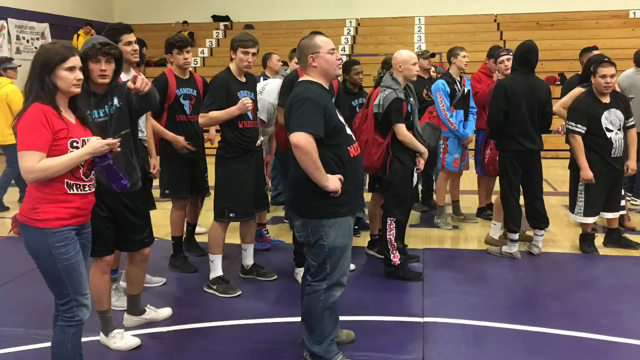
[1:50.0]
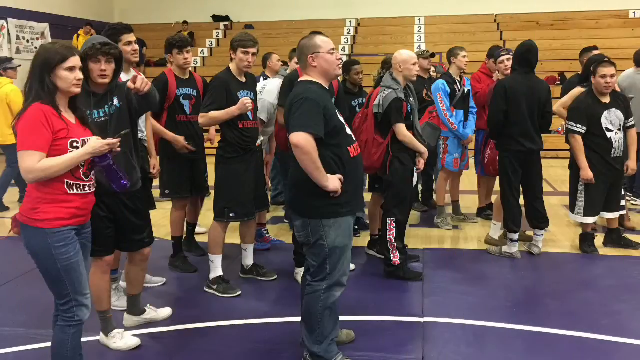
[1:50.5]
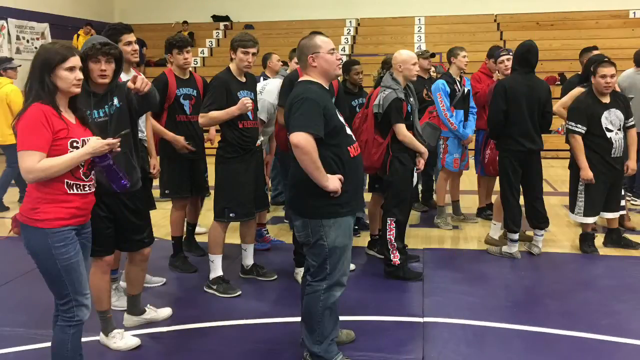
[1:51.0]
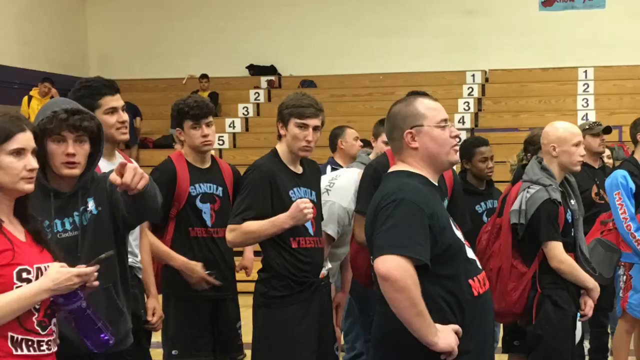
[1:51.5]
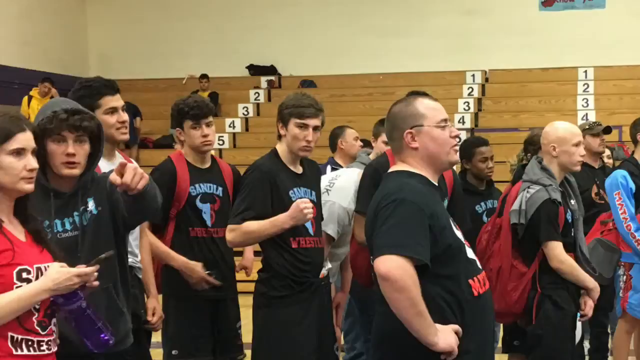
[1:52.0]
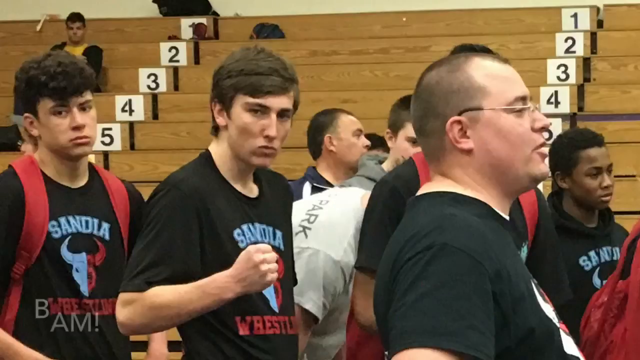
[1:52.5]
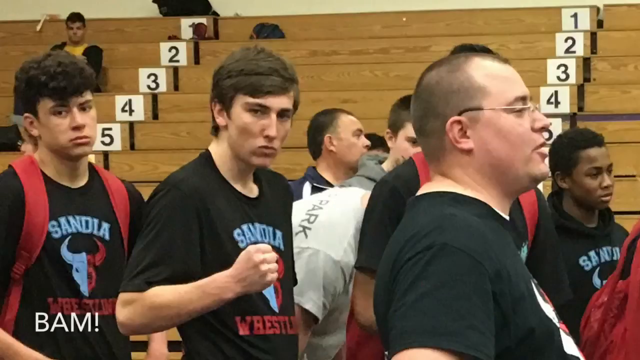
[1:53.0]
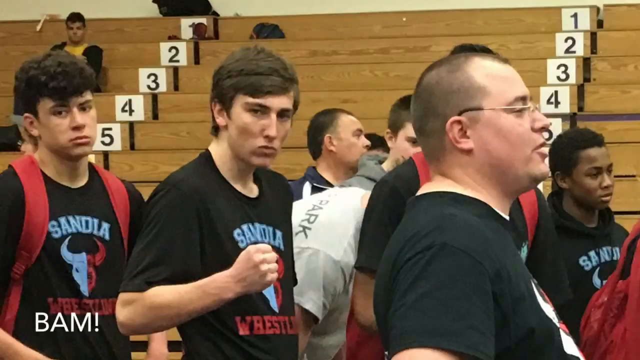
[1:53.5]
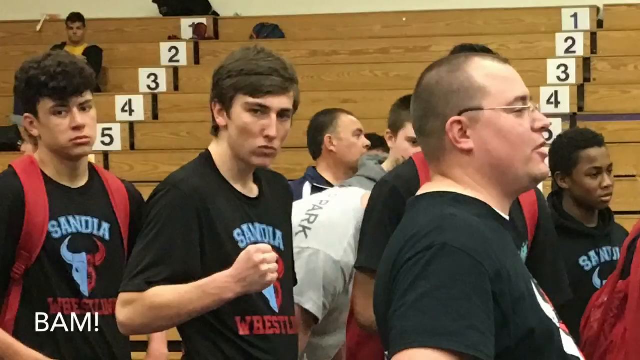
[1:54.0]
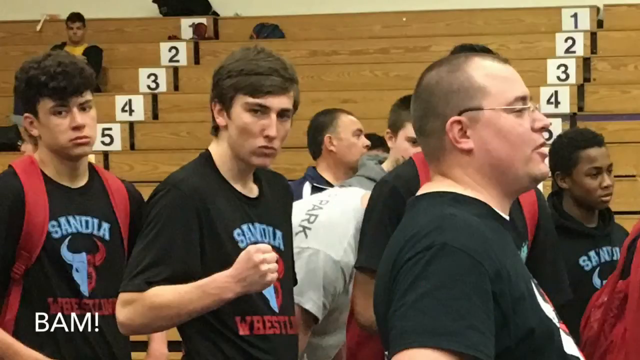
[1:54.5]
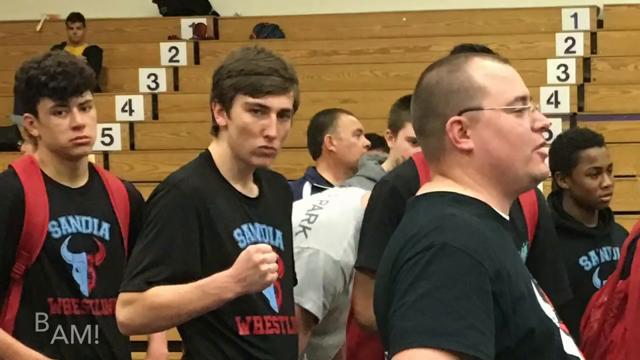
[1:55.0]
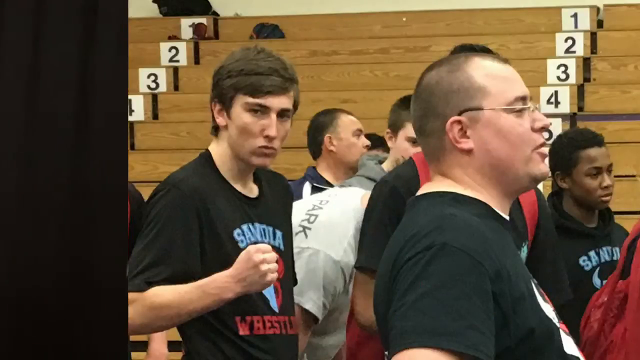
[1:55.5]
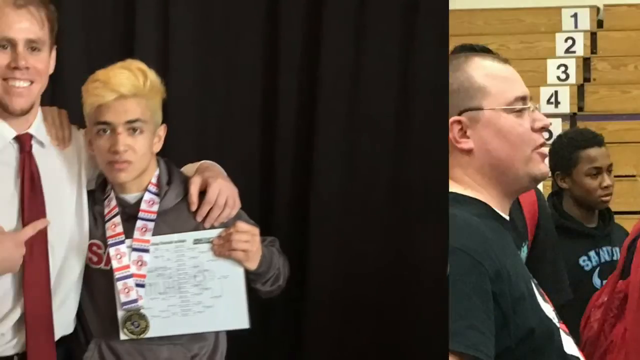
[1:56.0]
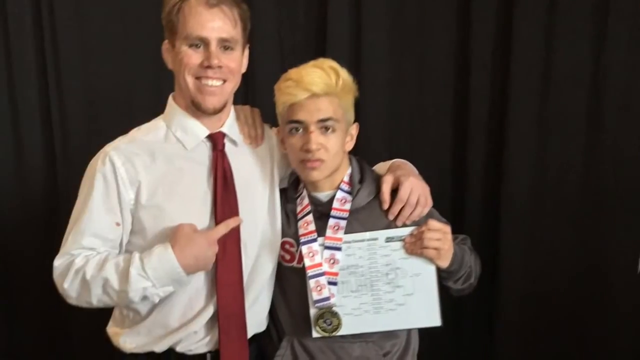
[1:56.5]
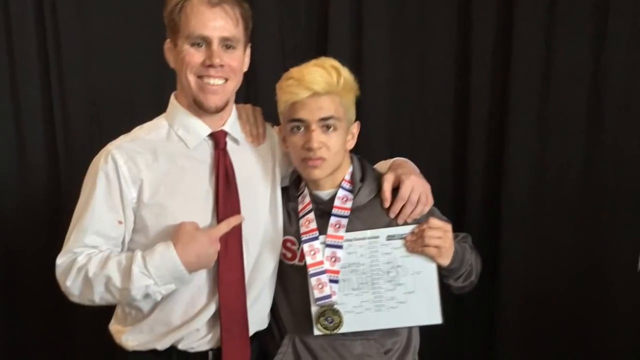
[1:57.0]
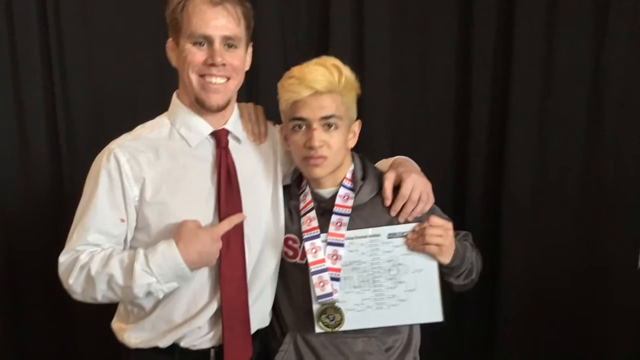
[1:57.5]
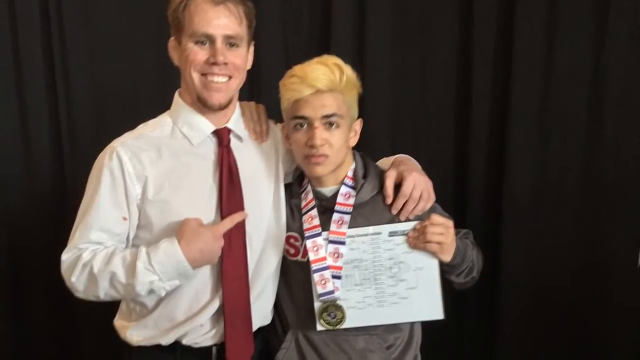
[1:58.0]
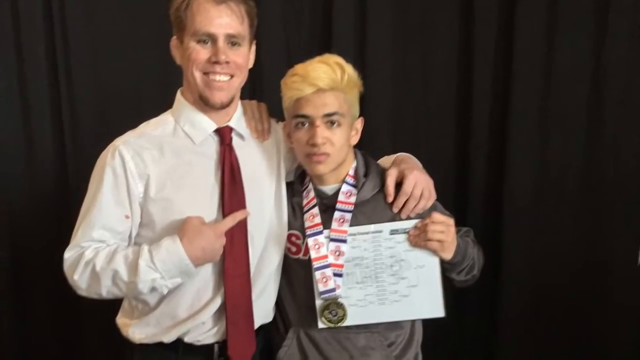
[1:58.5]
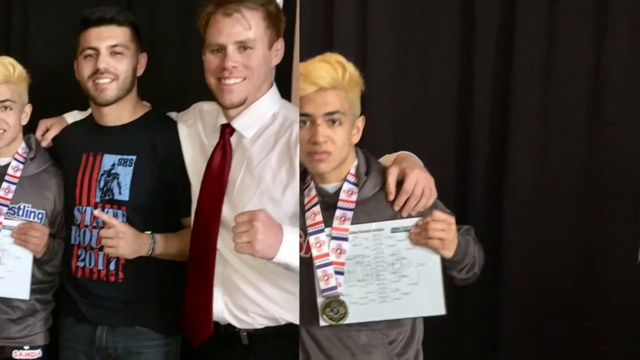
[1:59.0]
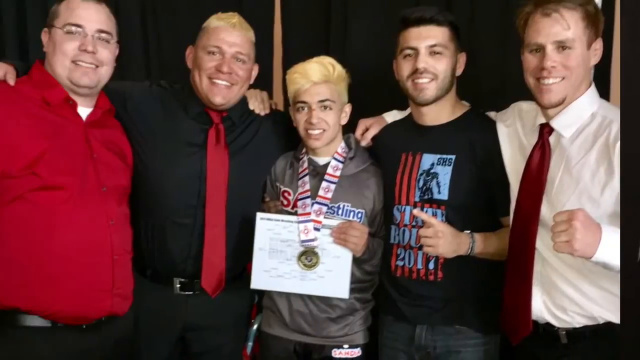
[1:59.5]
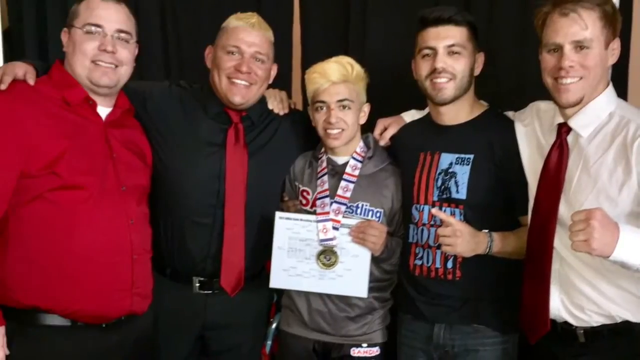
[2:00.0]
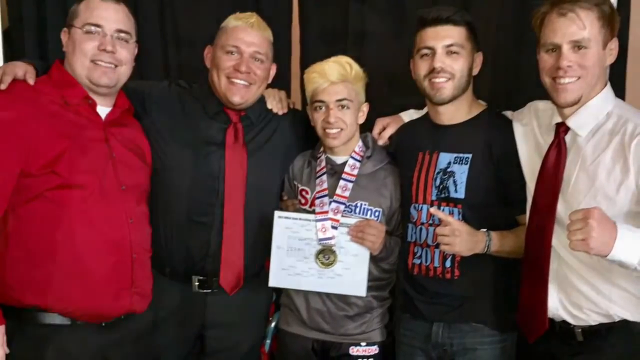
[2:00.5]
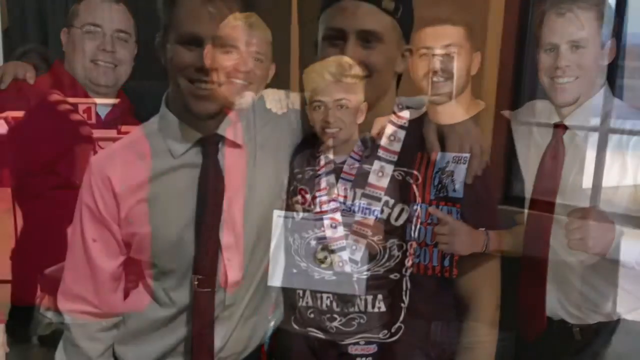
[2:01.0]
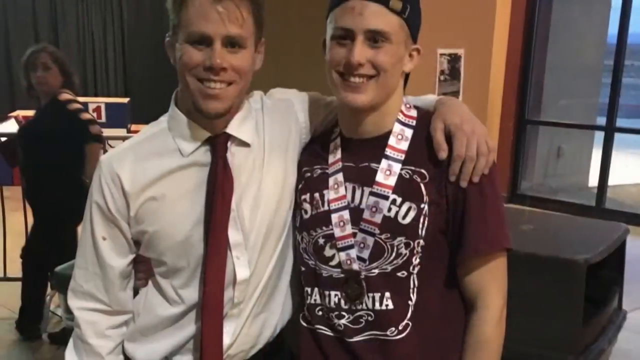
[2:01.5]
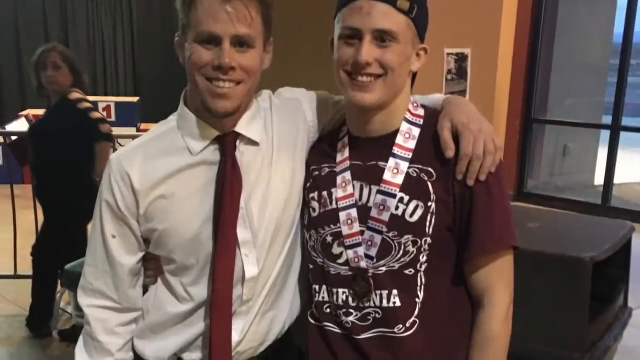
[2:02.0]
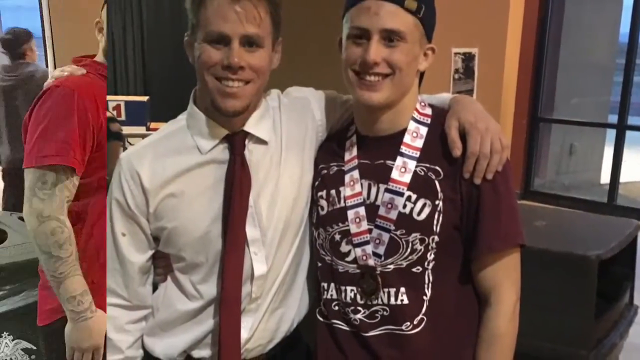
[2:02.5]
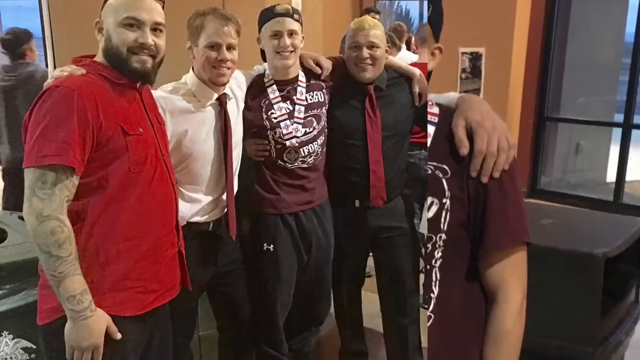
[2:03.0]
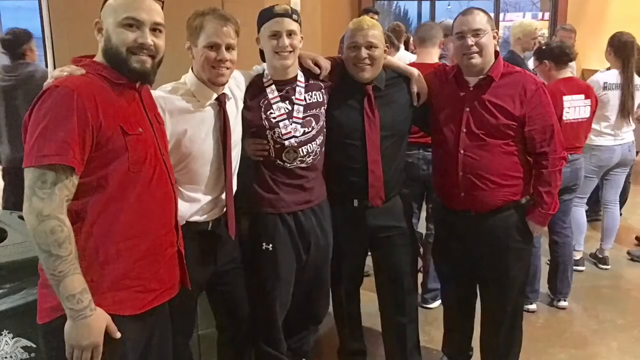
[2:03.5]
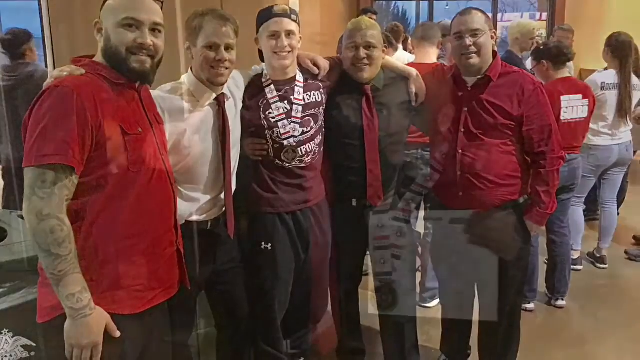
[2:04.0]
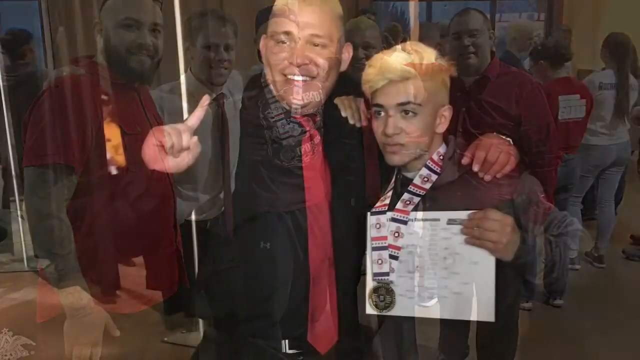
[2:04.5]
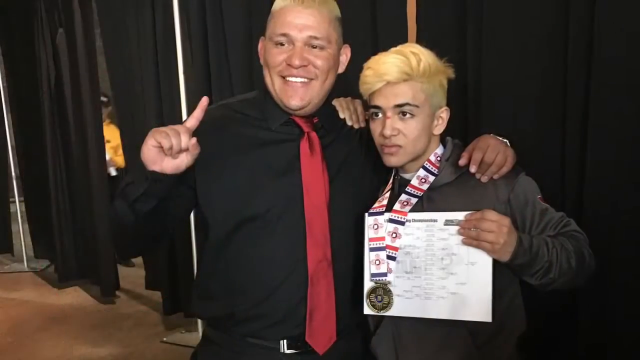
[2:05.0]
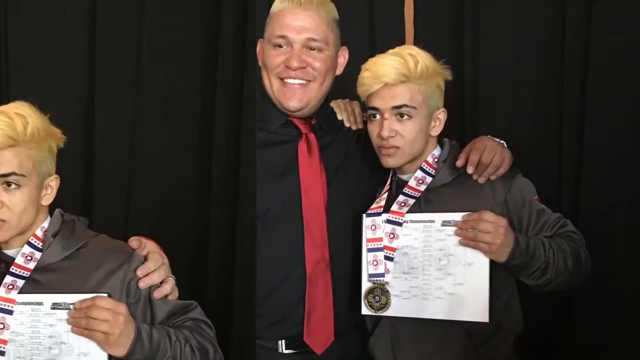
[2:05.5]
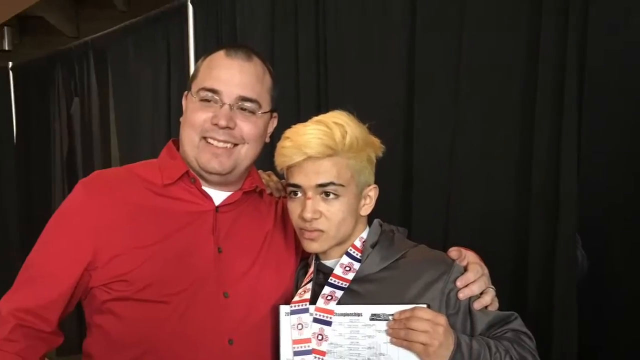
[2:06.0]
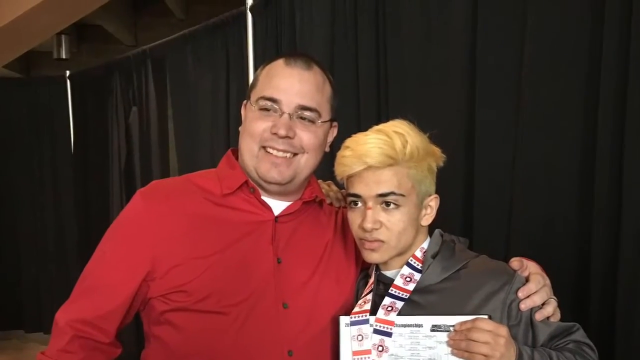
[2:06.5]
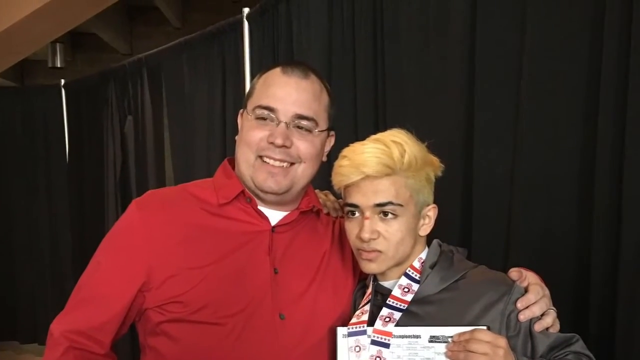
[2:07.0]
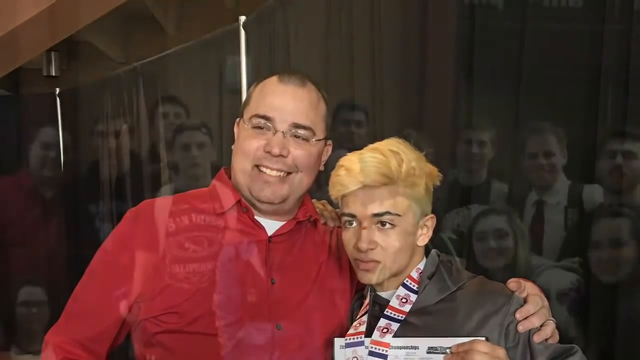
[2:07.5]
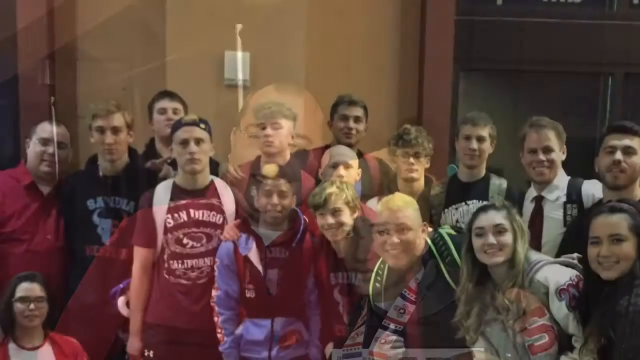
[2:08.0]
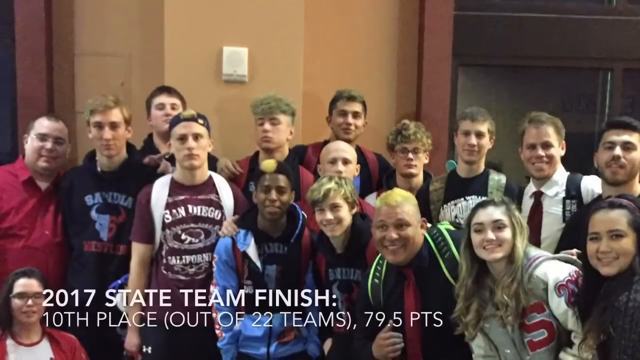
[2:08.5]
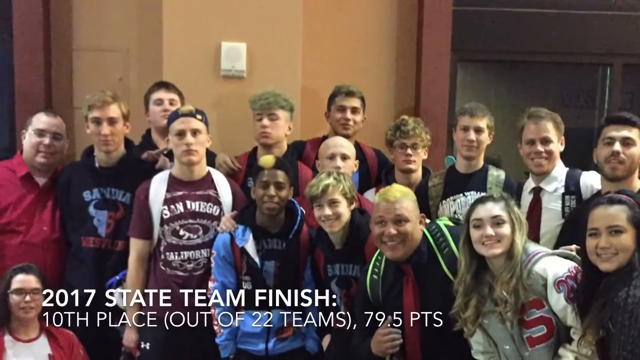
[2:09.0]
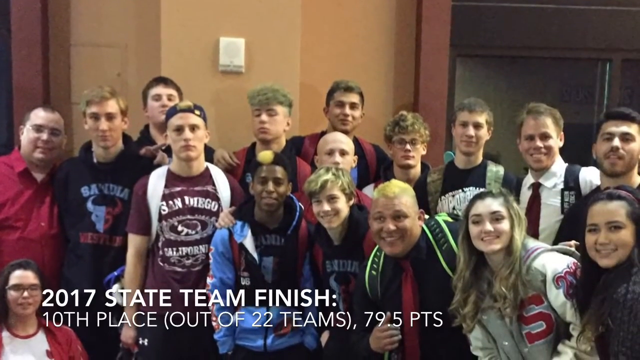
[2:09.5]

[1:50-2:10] Still images show wrestlers standing around on the mat after the wrestling, some with what look like family members and probably coaches. Then a picture shows a group of students standing together, celebrating and having their picture taken; the team is all present, and it looks like some friends and coaches are in the picture with them. Text reads "2017 state team finish, 10th place out of 22 teams, 79.5 points."